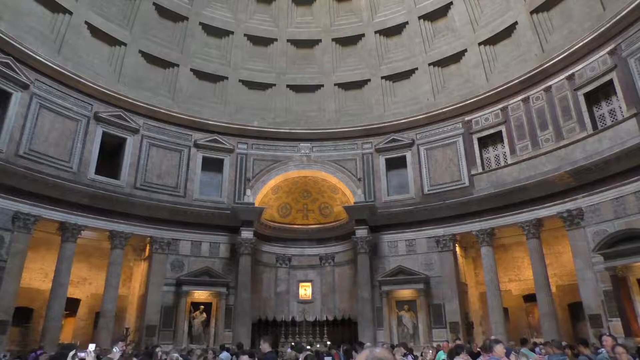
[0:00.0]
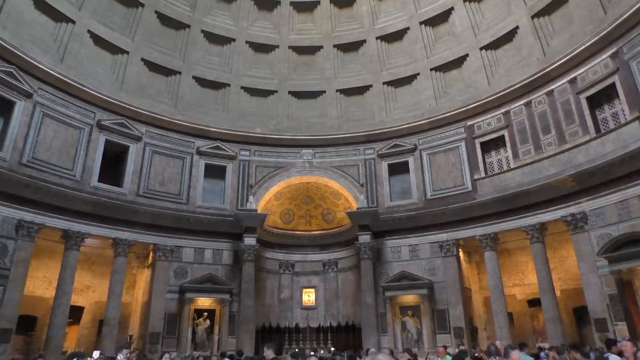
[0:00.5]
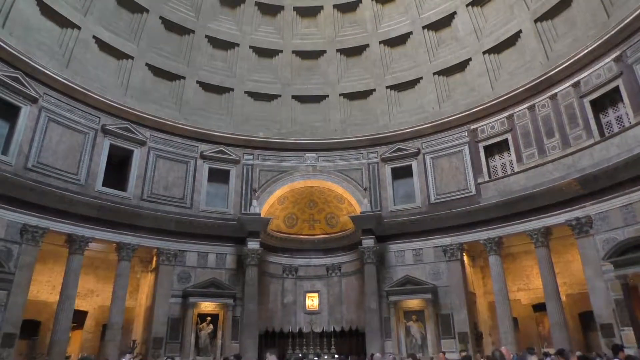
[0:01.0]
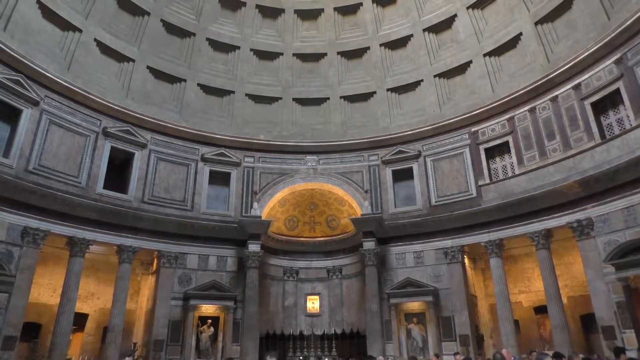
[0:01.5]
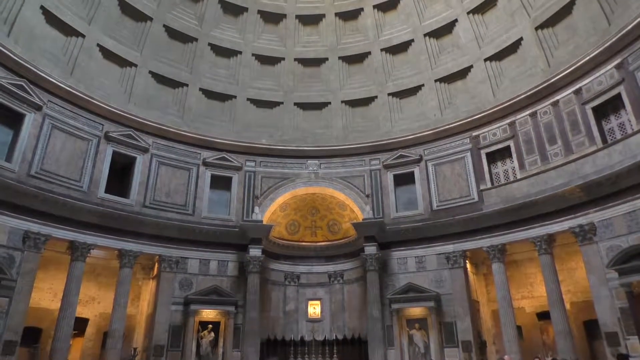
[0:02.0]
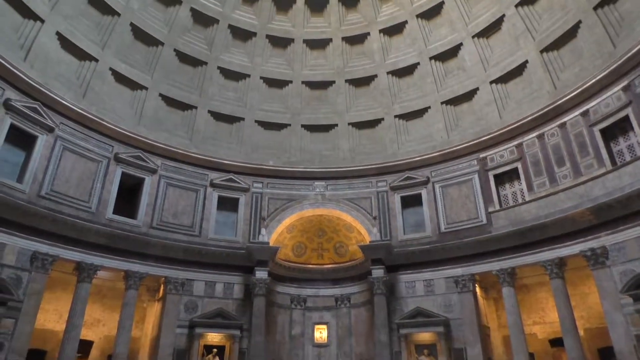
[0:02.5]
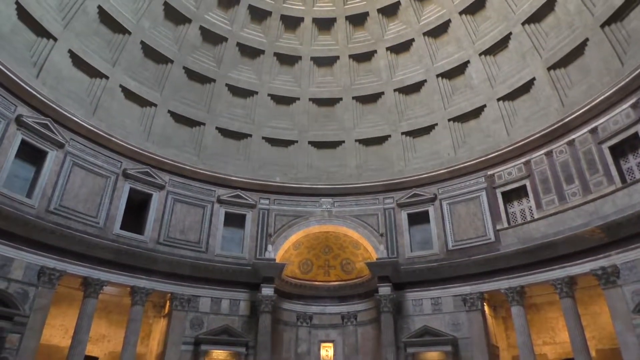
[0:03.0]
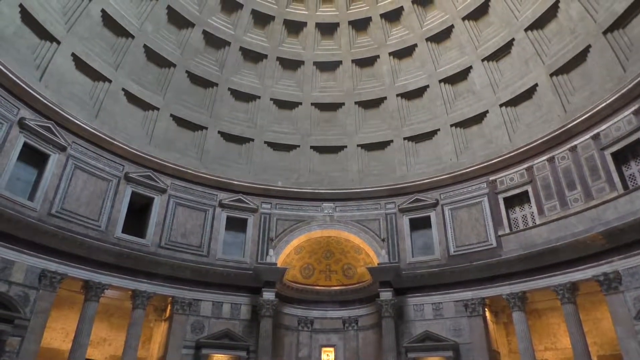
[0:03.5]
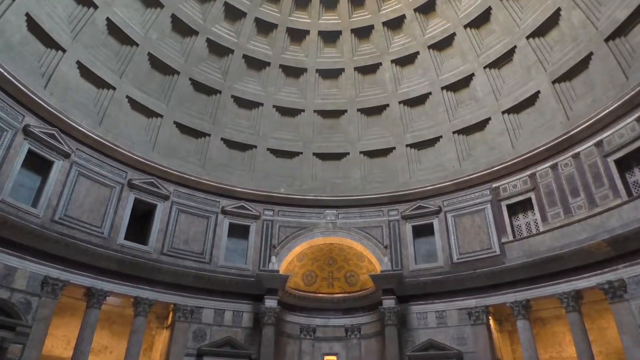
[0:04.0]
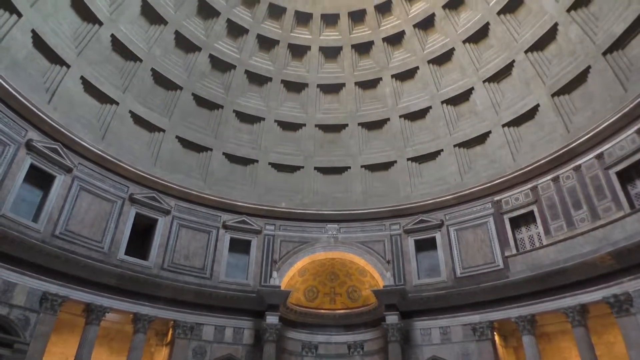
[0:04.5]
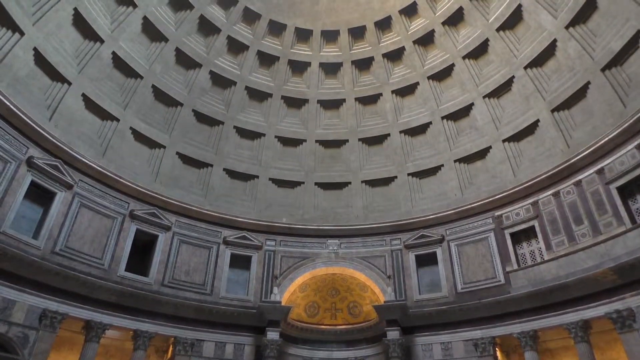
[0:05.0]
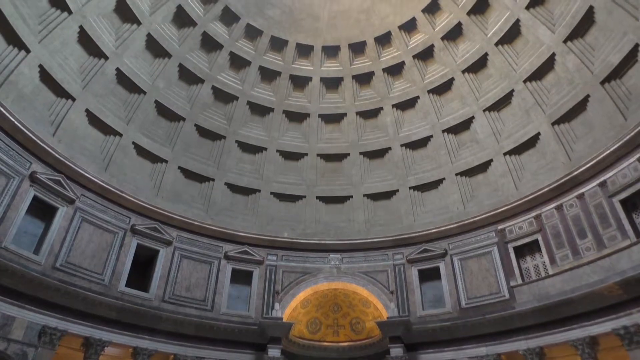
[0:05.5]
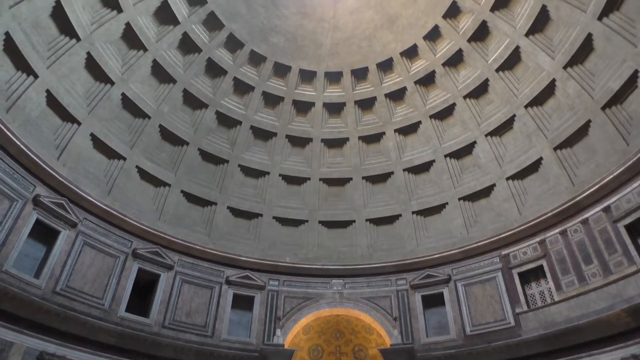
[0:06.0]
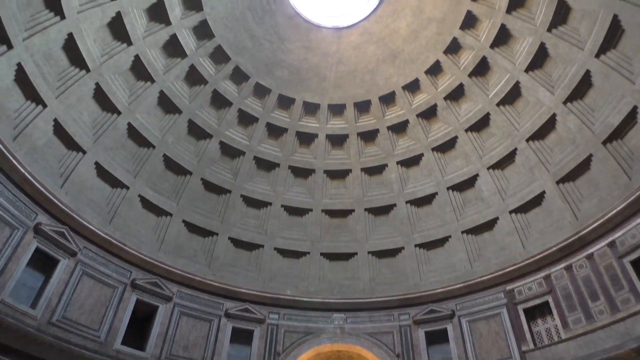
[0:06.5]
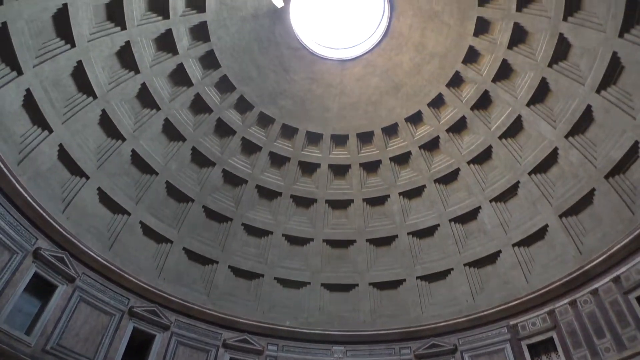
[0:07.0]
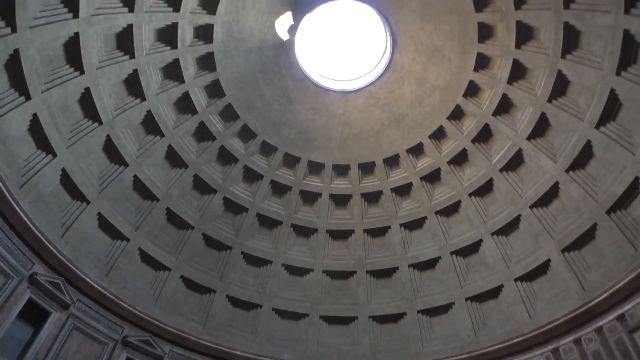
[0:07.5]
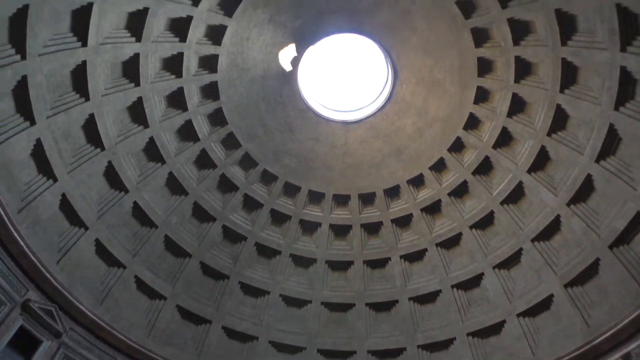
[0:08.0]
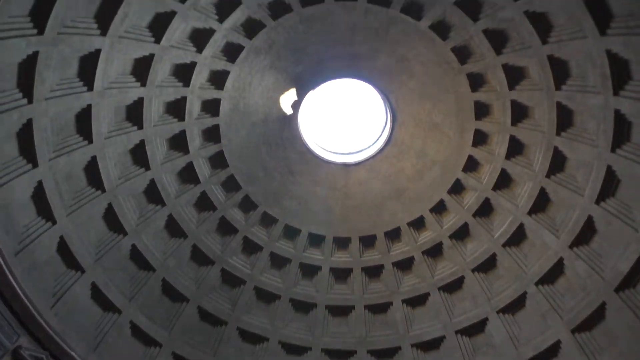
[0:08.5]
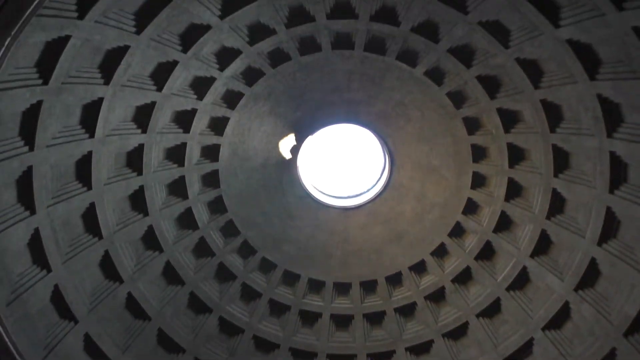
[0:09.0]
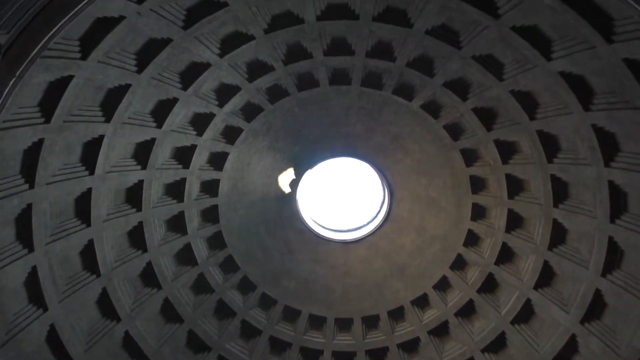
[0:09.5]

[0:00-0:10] The interior of a cathedral is shown. In the background there is an archway with artwork in the center, and above it a large dome stretches upward. There appear to be multiple square engravings in the dome. The camera pans up, all the way, to show a large skylight at the top of the dome. To the left of the skylight there appears to be another small cut, or perhaps a light. The squares in the dome are smaller toward the top, closing in on the skylight, and larger at the bottom.